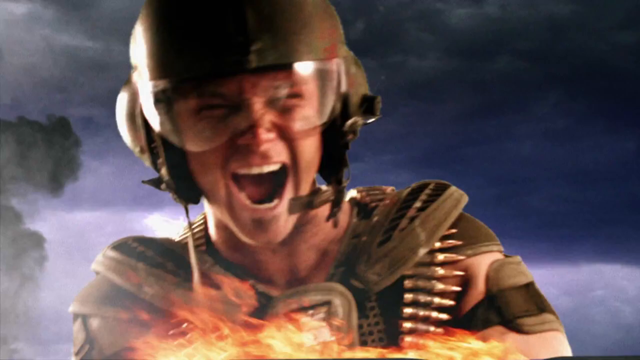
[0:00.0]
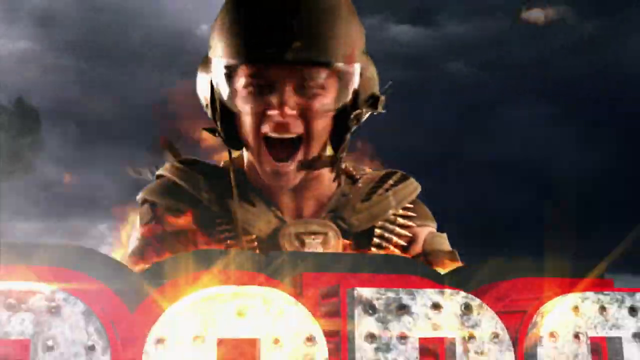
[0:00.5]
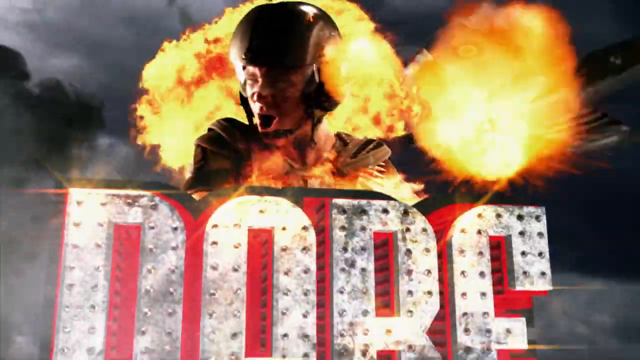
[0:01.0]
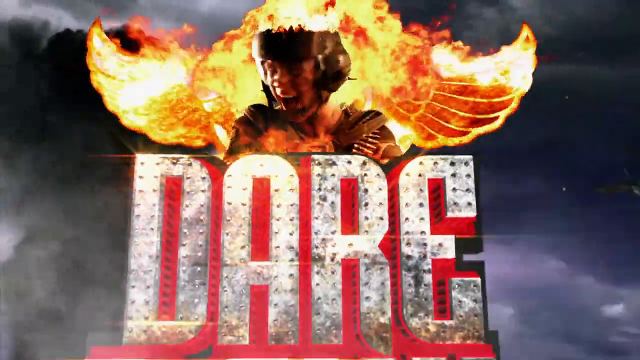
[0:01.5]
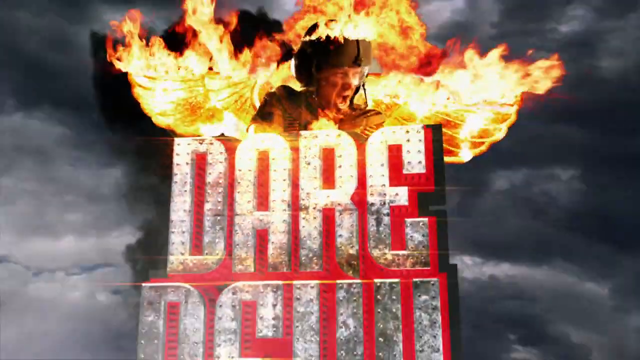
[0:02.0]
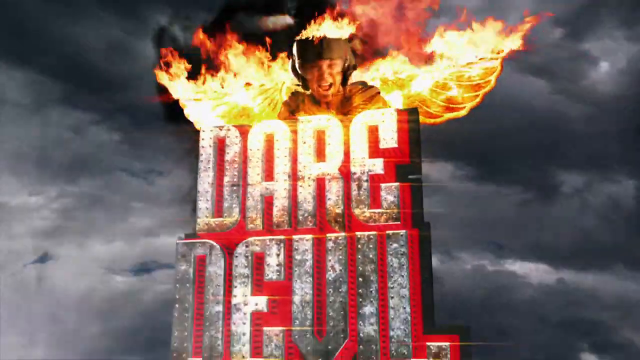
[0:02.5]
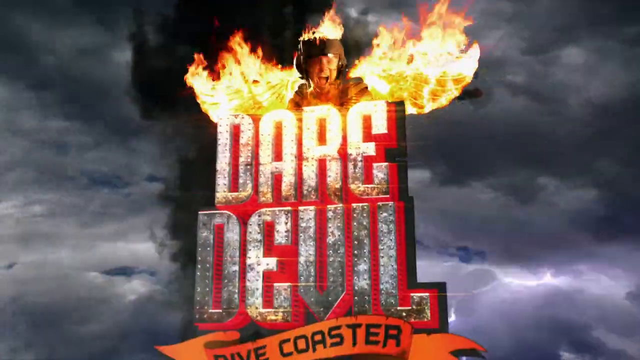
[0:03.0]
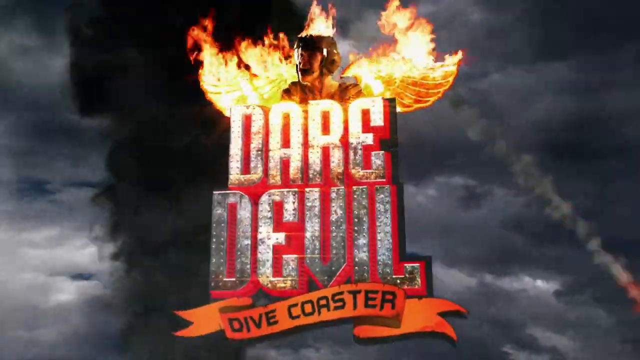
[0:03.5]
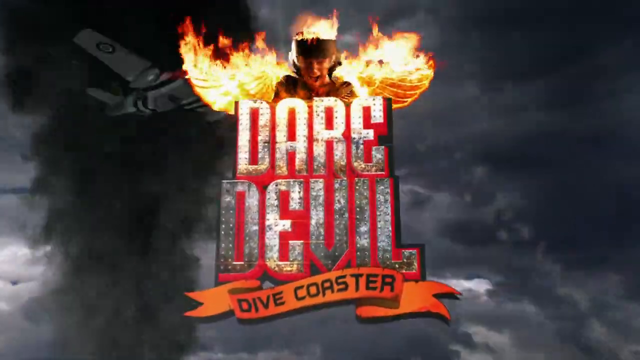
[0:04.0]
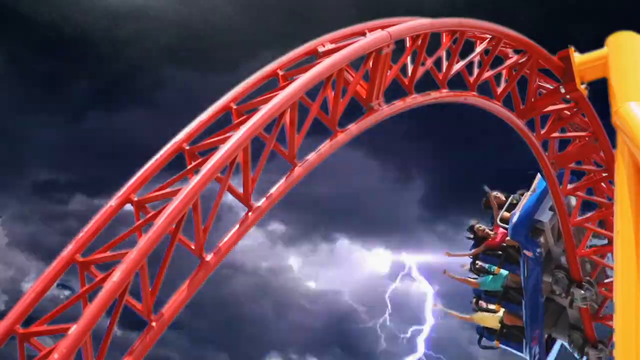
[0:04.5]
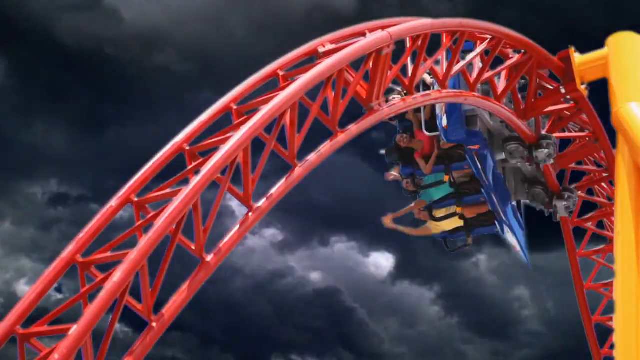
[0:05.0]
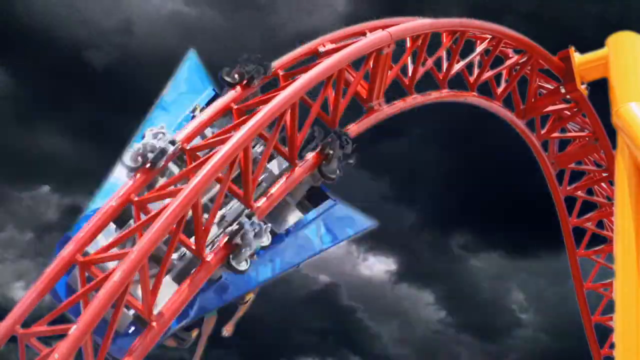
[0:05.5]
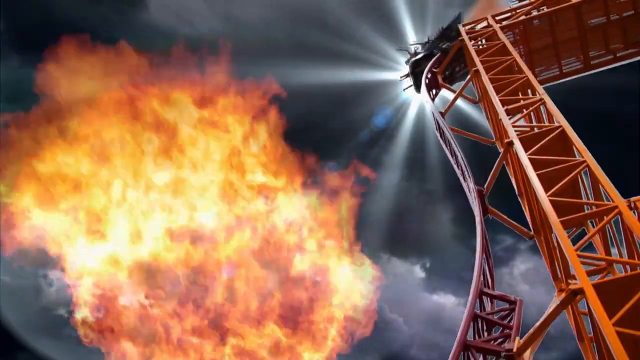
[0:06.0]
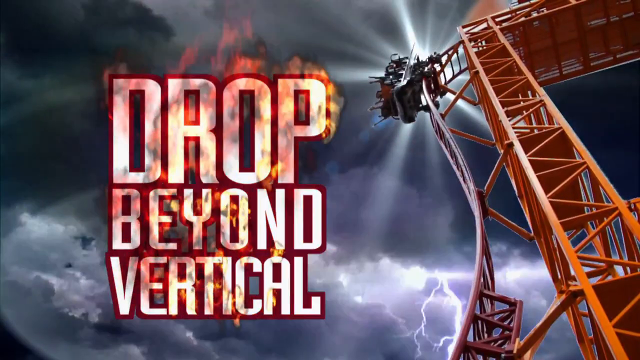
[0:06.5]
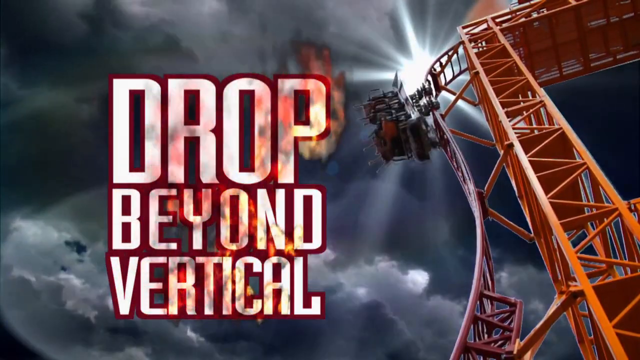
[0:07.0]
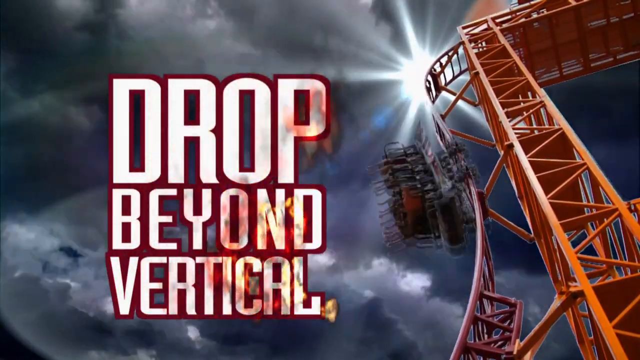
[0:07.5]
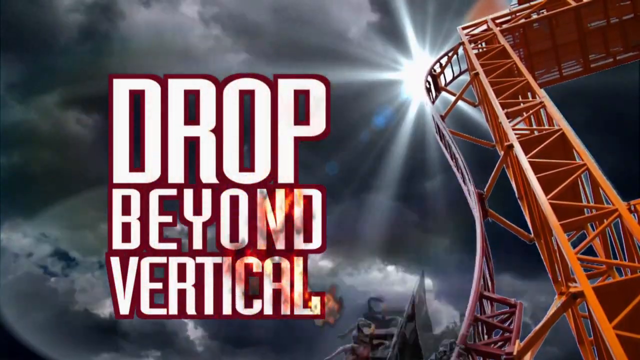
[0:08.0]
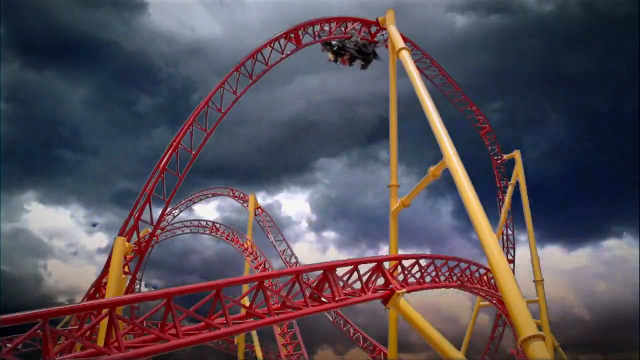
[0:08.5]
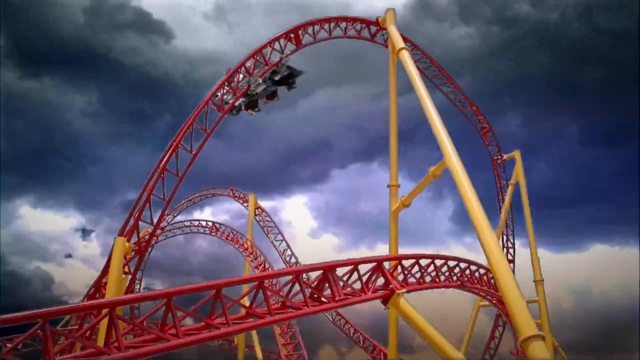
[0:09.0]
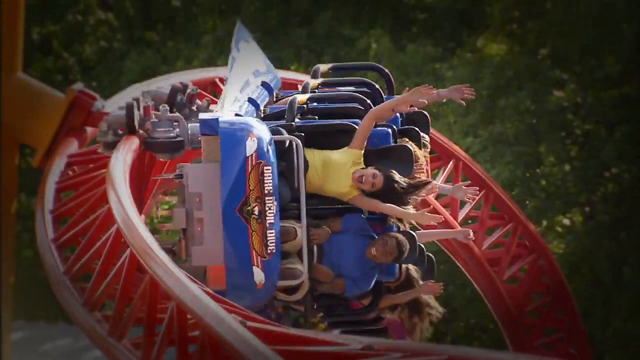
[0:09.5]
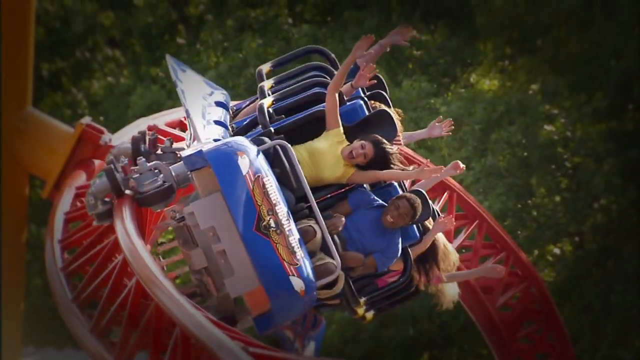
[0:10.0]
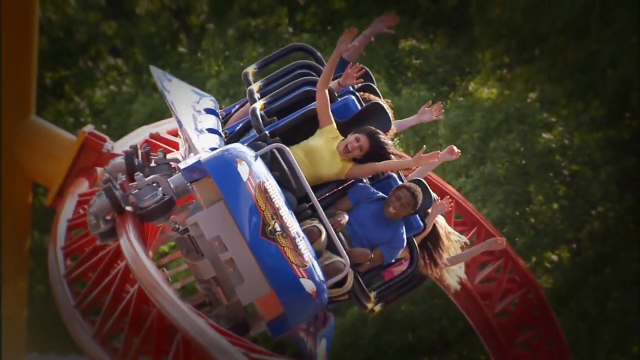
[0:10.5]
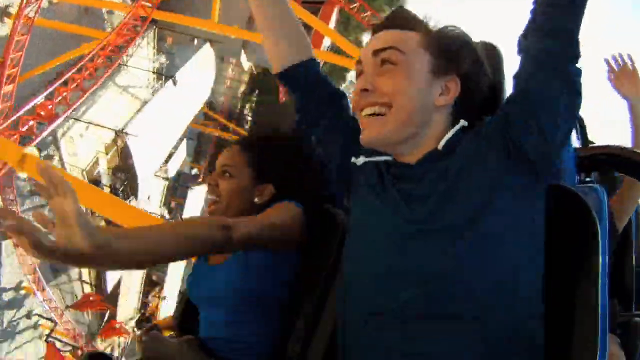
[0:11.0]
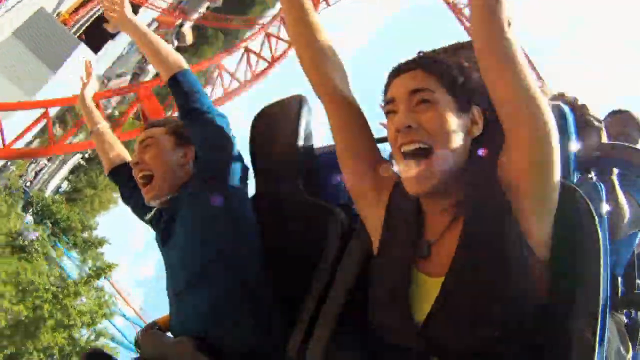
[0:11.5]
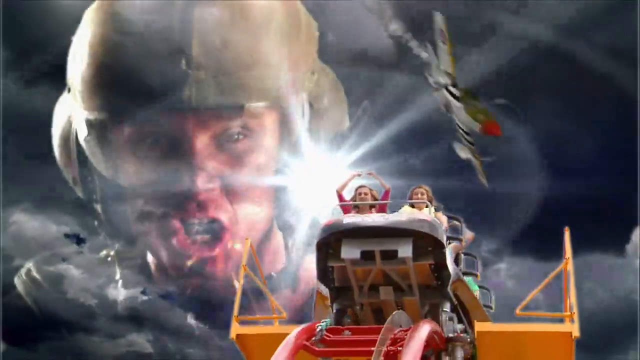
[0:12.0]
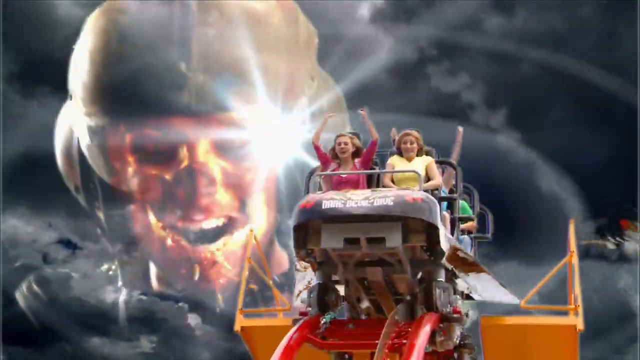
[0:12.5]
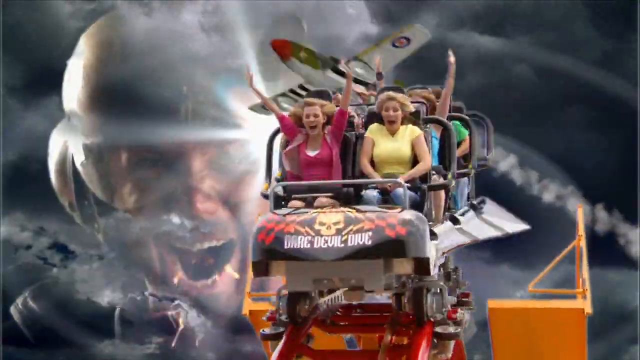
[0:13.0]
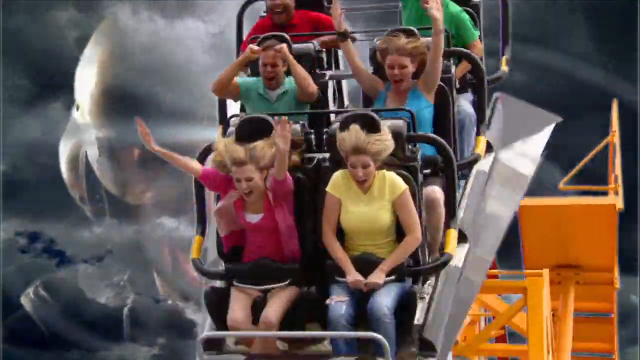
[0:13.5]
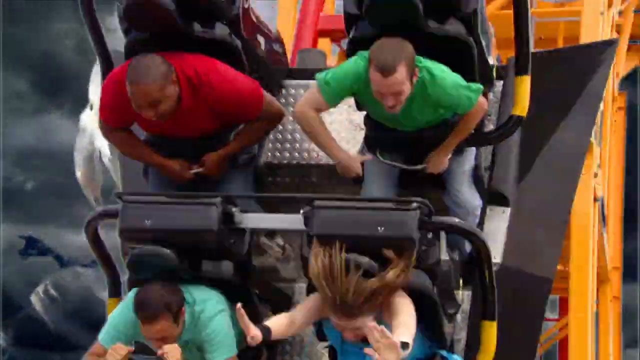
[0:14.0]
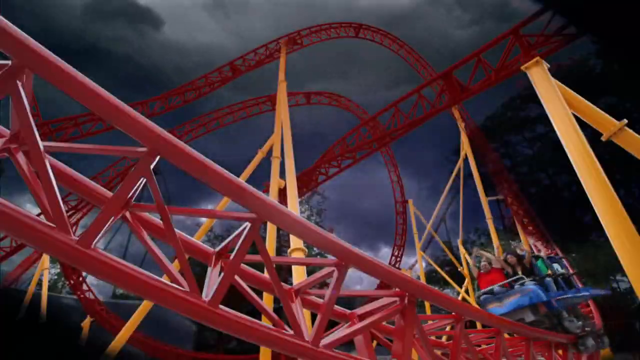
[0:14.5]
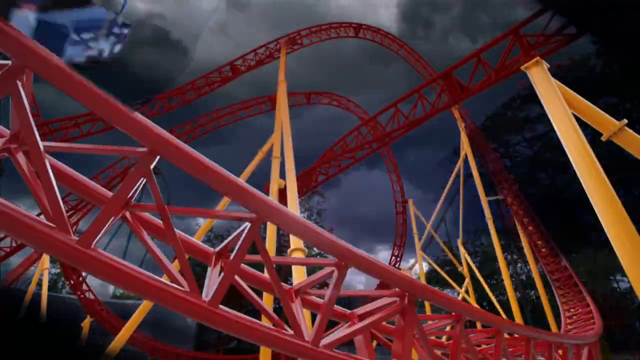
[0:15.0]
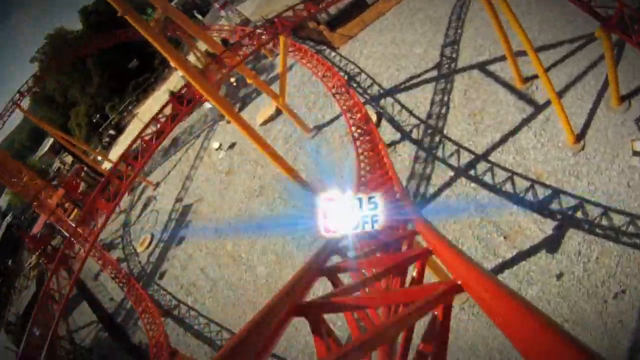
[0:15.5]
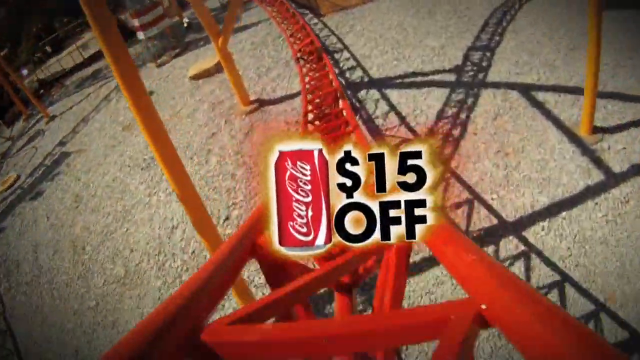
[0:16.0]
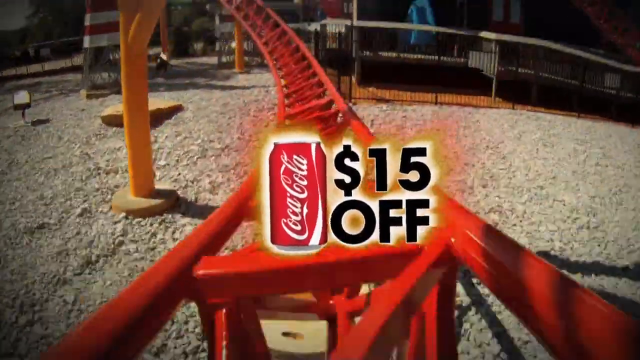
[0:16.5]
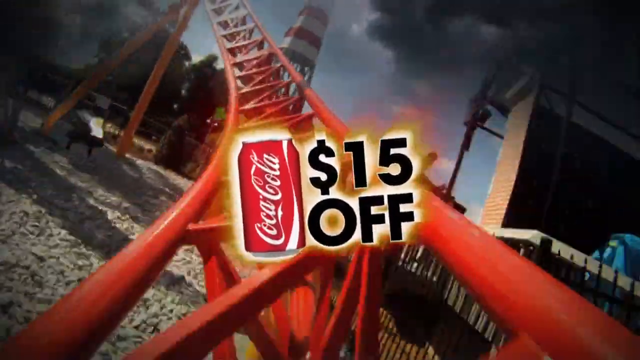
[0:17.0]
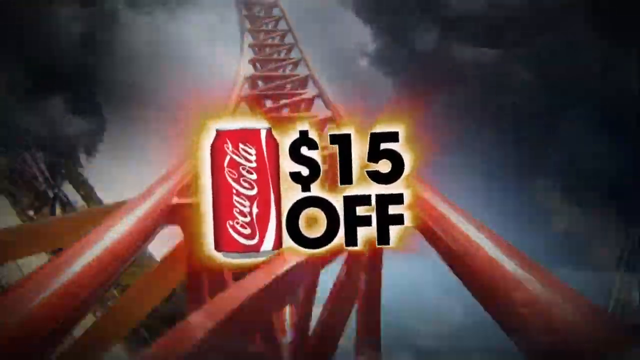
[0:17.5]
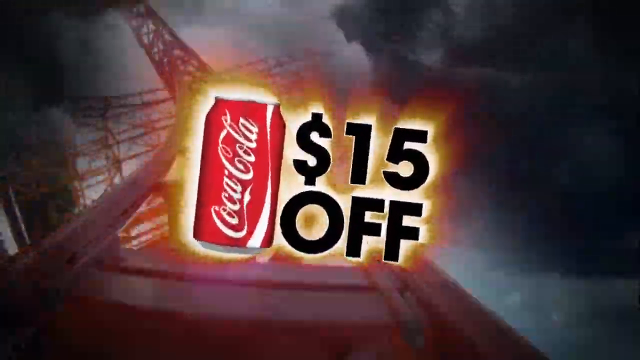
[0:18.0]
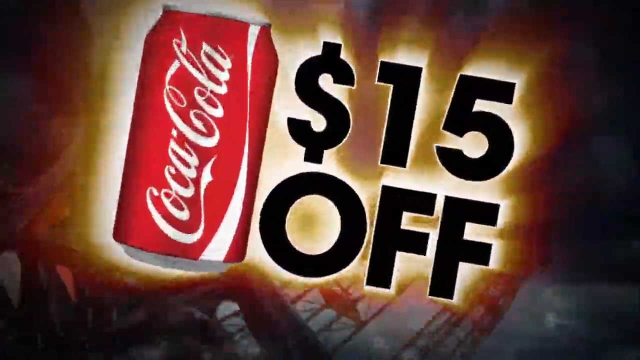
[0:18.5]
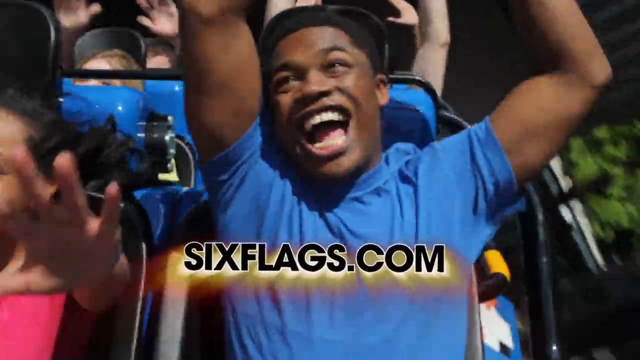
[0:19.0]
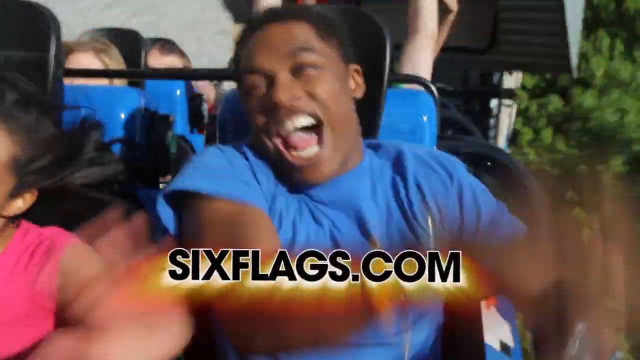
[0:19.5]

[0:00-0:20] The video opens on a man wearing a helmet and safety goggles; he looks like he is possibly in the military. There is a lot of fire and explosions behind him. The camera pans out so that only the top part of the man is visible. Wings that are on fire then appear behind him, with the word "daredevil" underneath him, along with the words "dive" and "coaster." Next comes an image of a roller coaster with a red track and a blue car that people are sitting on. The riders are parallel to the ground on the track, and then they go upside down. The roller coaster has a background of dark clouds. It drops almost straight down, and the words "drop beyond vertical" are in flames to the left of the roller coaster. More images show people on the roller coaster with their arms up, smiling, as it turns and flips them upside down. One shot shows the riders in slow motion. A couple more close-up shots show people with their hands raised in the air, smiling as they ride, with a blue, cloudy sky behind them. The scene switches to the man from the beginning in the background while, in the foreground, people ride a differently colored roller coaster that says "Daredevil Dive" on it. The riders come toward the camera before the coaster eventually tips and goes down. Another image shows the people on the roller coaster from a ground view, shot upward, again against a dark computer-generated background of a cloudy sky. The camera view then goes down the track of a roller coaster, and a Coca-Cola can appears on the screen with the text "$15 off."